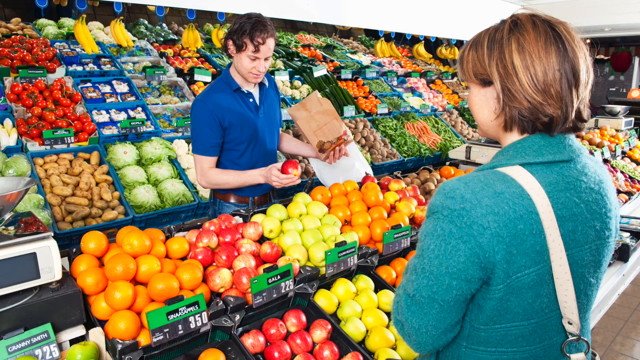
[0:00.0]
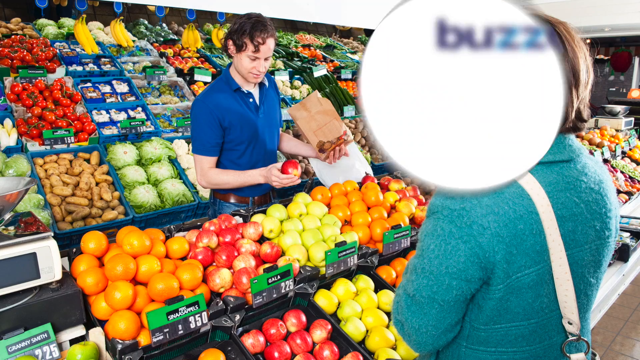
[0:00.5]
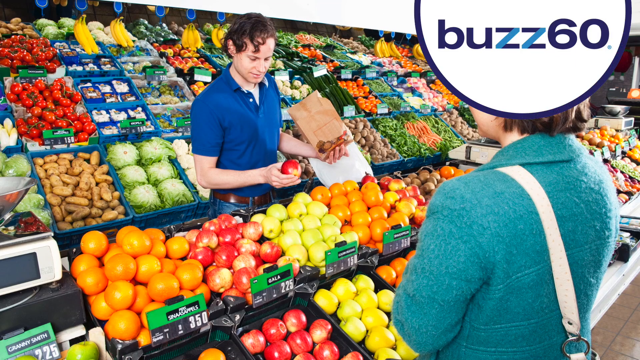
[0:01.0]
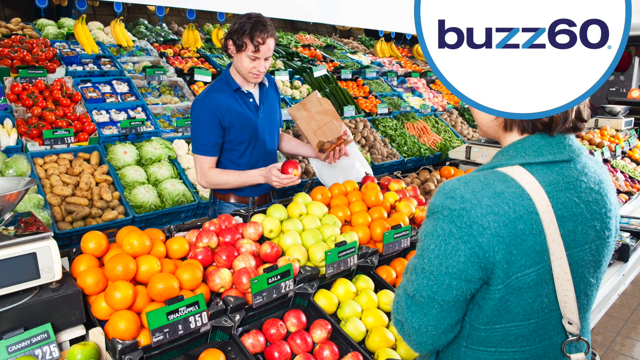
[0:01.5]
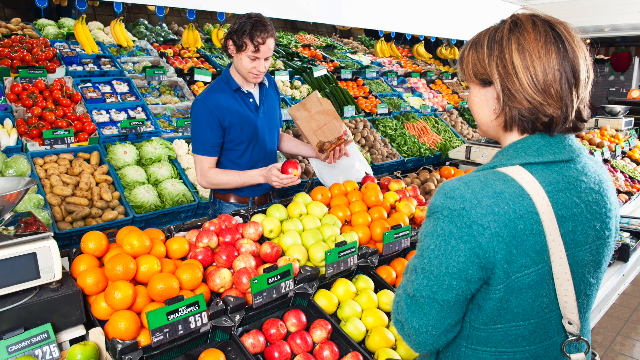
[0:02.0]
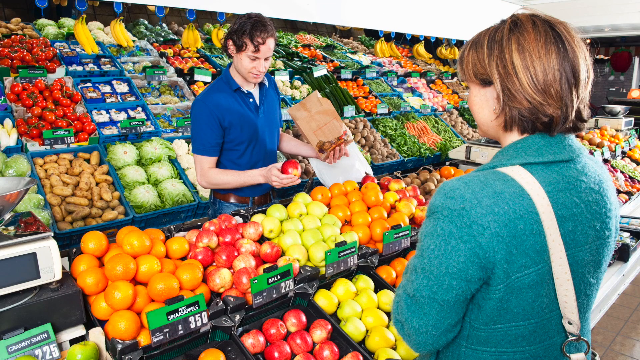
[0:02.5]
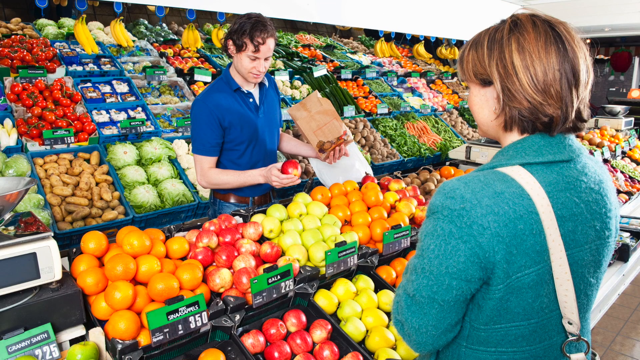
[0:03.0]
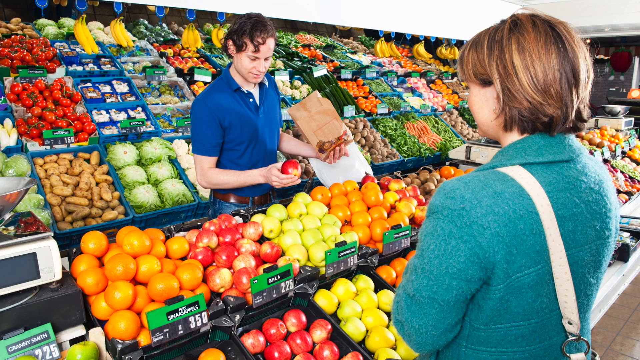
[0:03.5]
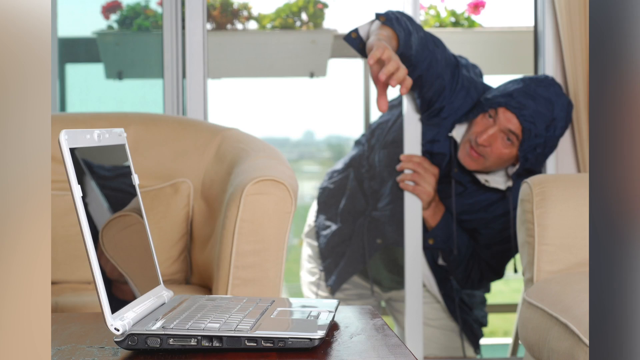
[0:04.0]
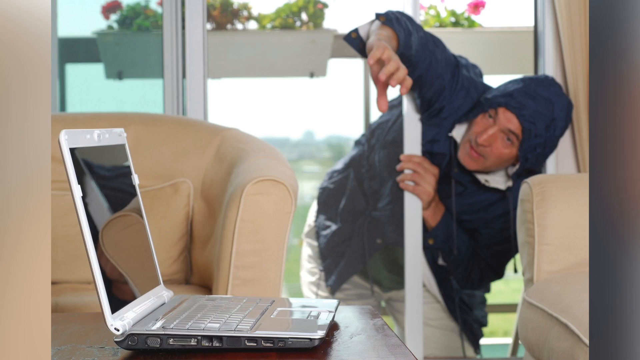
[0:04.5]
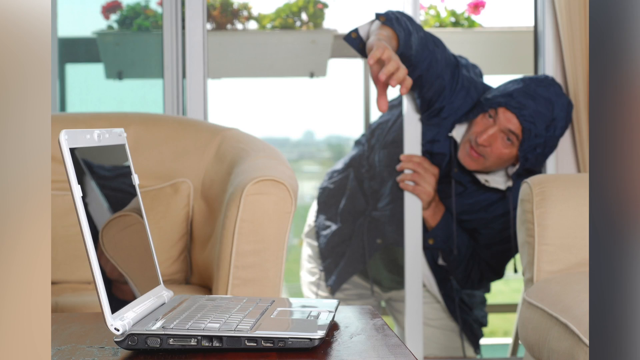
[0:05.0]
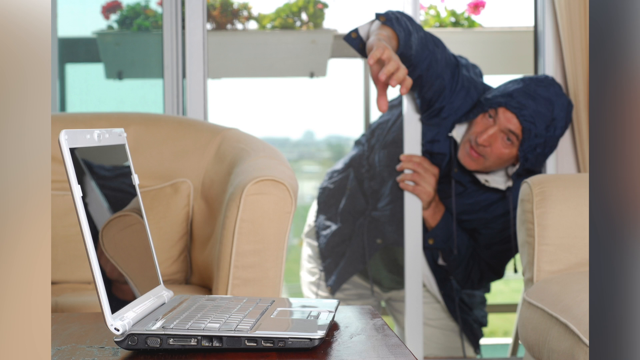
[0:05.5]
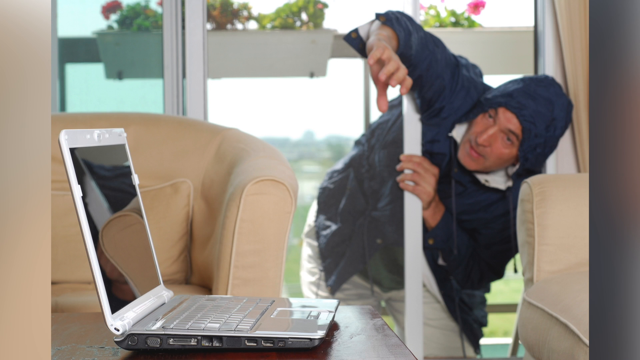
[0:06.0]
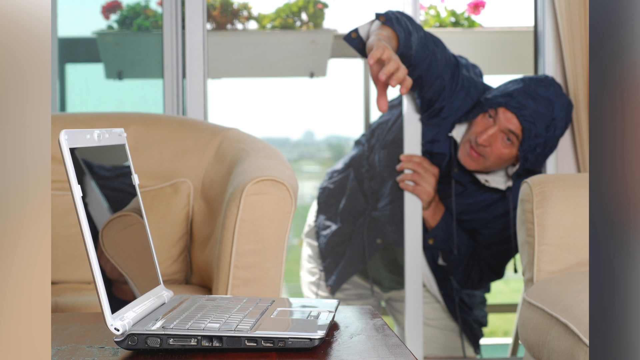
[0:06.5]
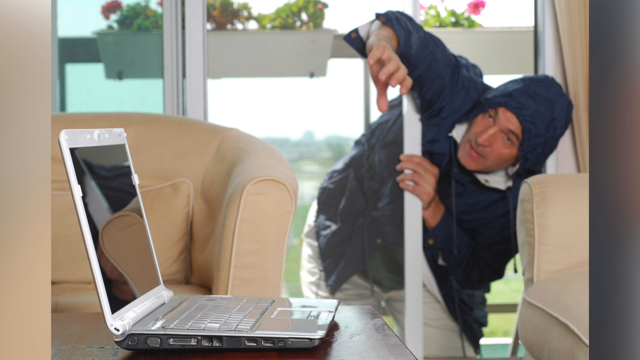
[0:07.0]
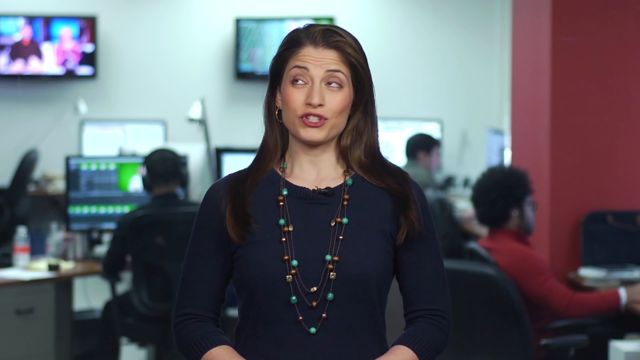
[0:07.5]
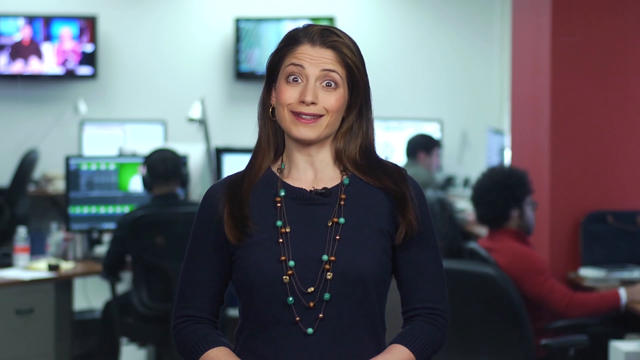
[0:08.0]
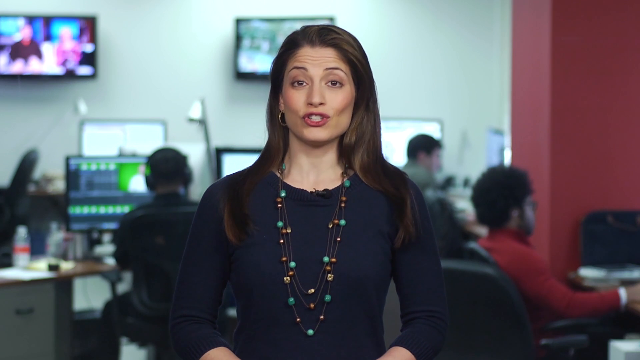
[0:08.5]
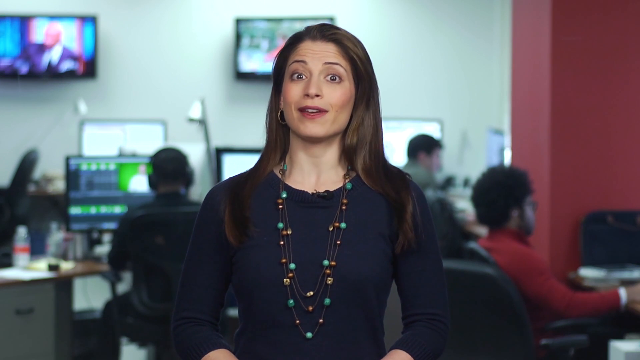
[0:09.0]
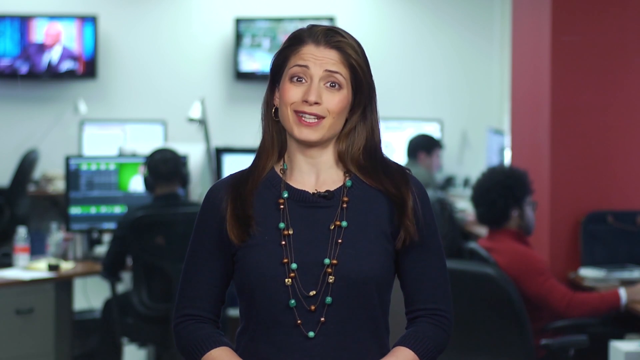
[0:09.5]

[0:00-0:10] A picture of a marketplace shows a woman with a handbag and a green sweater, and an attendant dressed in a blue shirt, blue jeans and a brown belt holding a red fruit, with some pieces of a brown bag there. The market has many items: vegetables and fruits, including apples, oranges, cucumbers, bananas, potatoes and onions. The video shows the details of the items, and the market seems large, with different items carrying price tags. There are crates of cabbages and crates of onions, and some bananas are hanging. Another picture then shows a man trying to repair something, with a white laptop beside him and a cream coat. Behind him is a big white wall with a window of transparent glass.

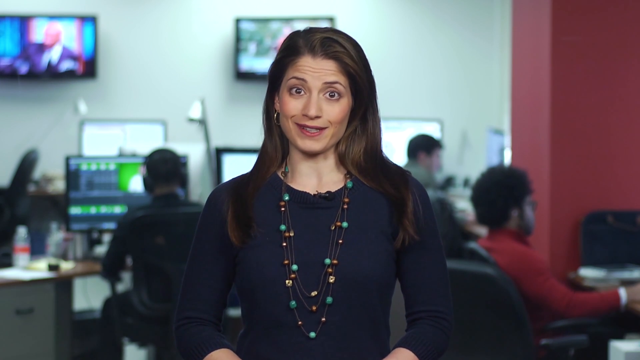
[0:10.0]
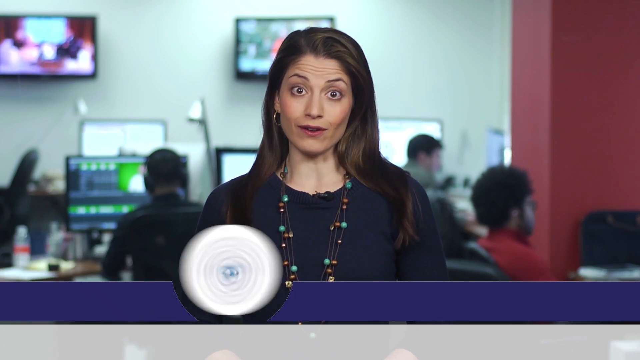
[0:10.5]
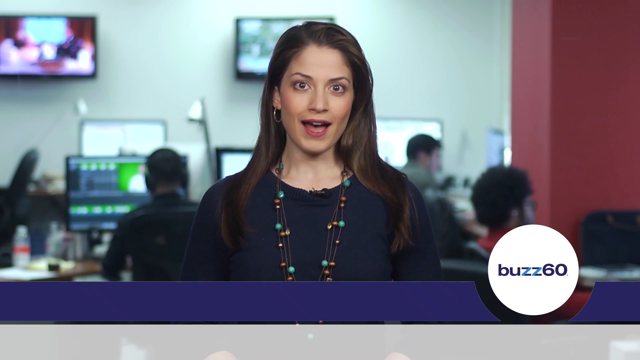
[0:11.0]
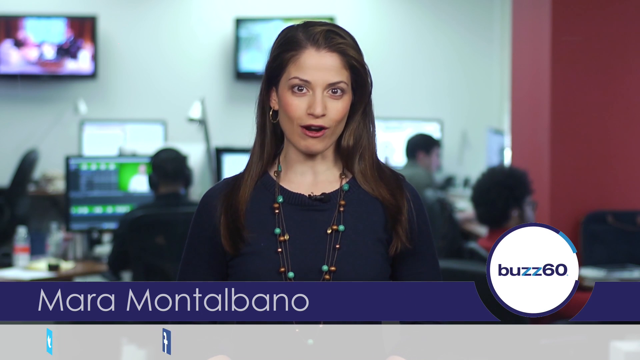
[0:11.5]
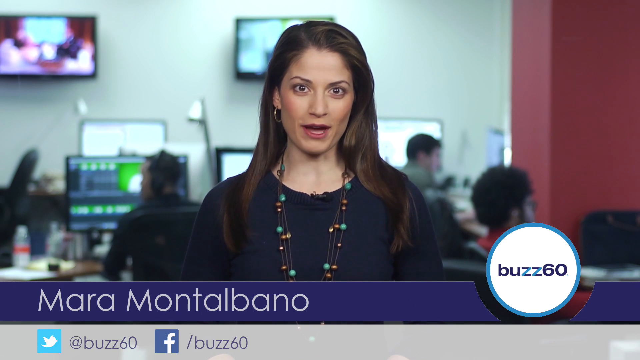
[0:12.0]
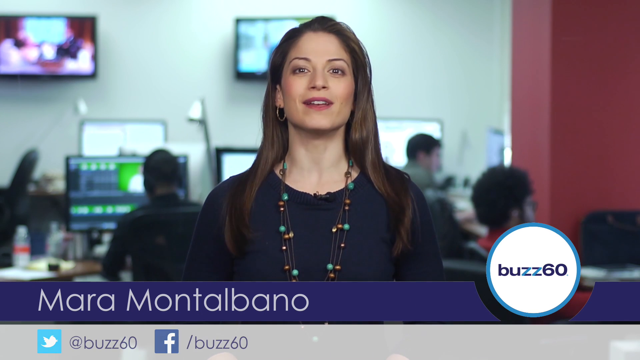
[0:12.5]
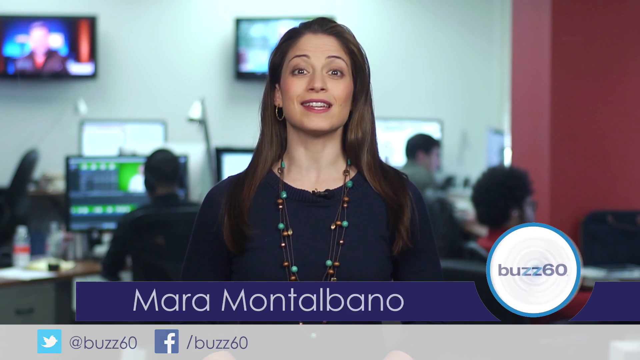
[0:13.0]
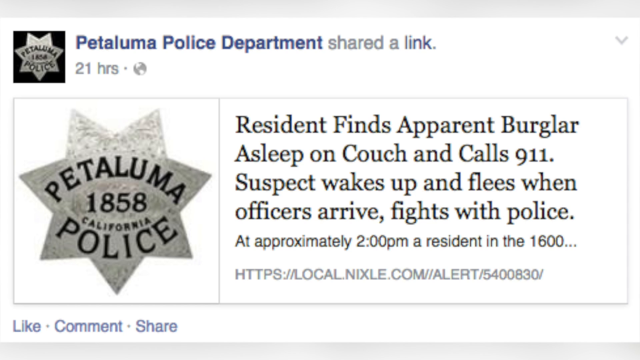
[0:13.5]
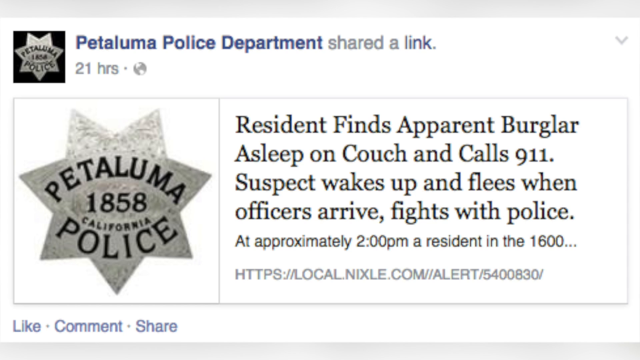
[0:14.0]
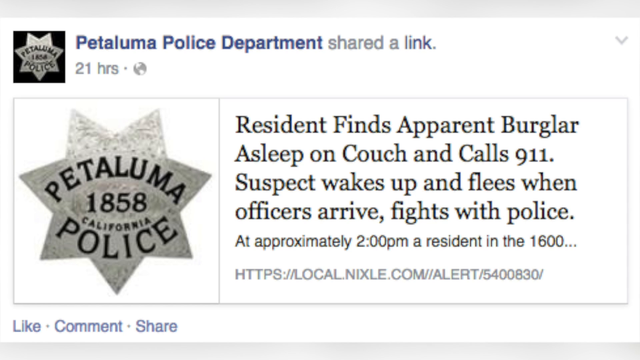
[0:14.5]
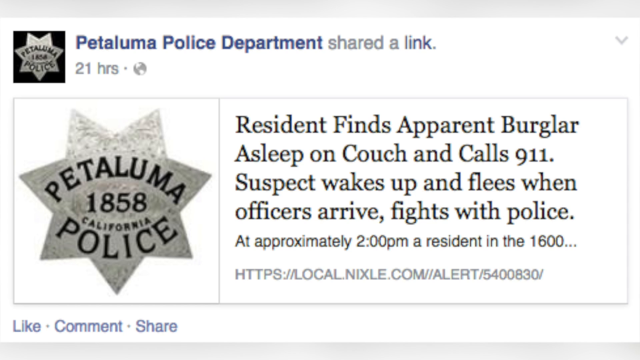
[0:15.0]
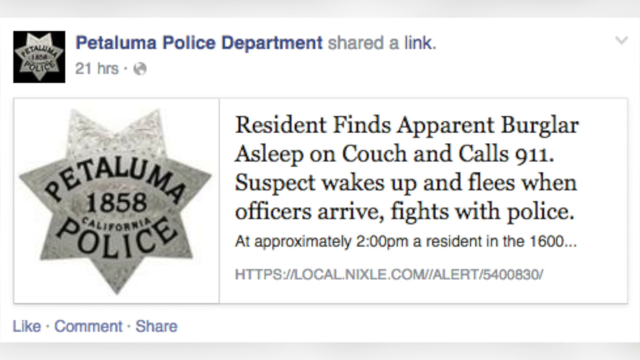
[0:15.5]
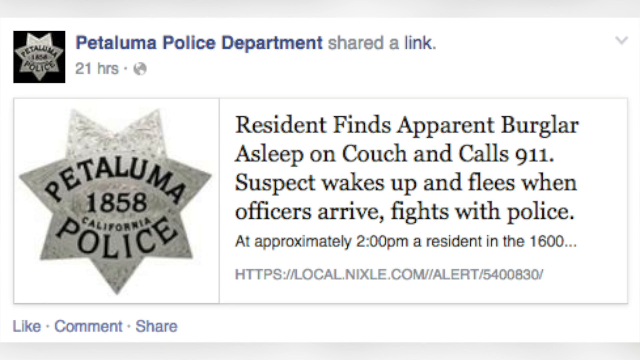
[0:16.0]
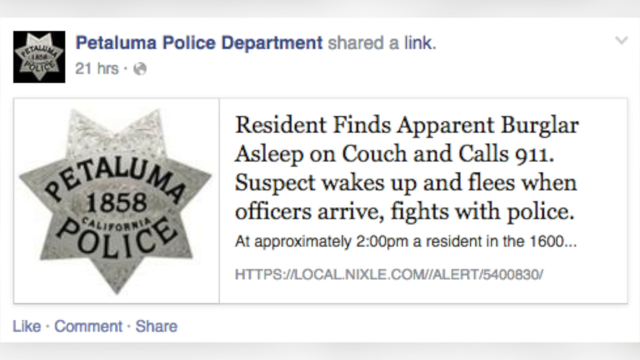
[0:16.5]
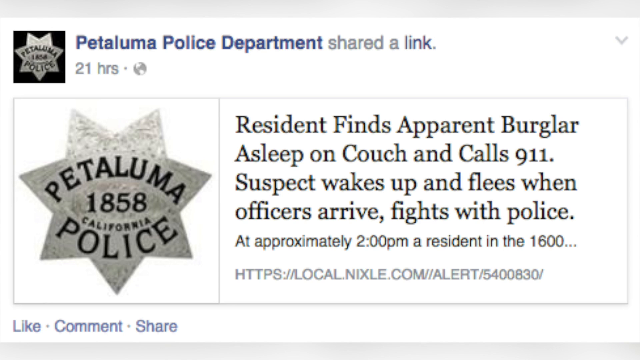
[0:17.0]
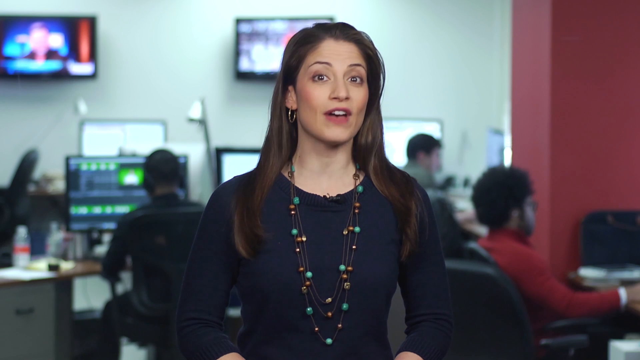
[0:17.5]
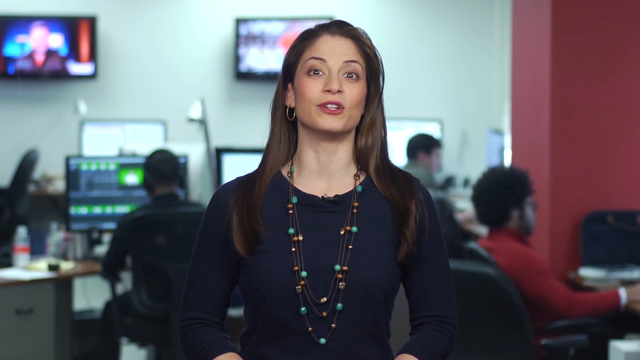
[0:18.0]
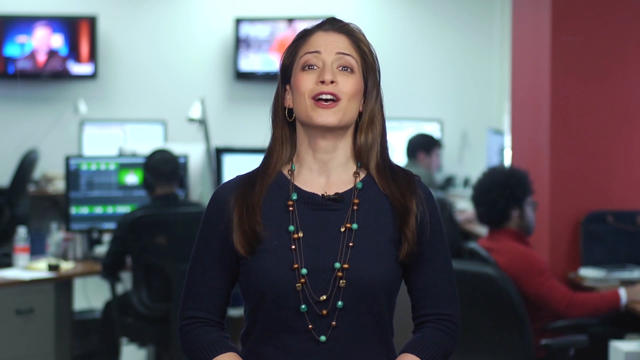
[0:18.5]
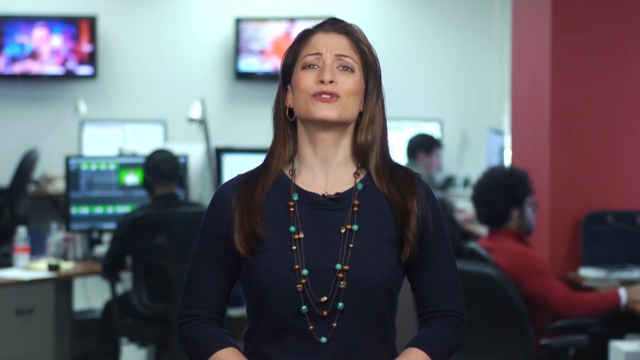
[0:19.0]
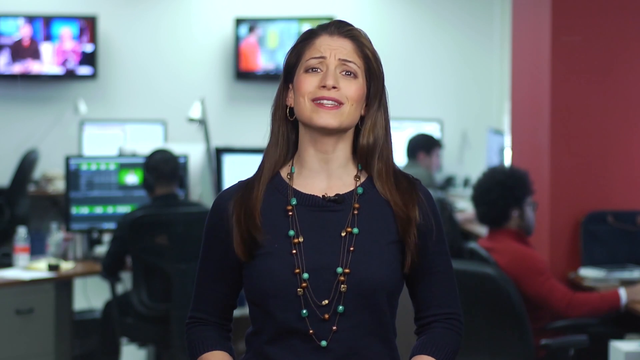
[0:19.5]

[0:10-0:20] A woman, maybe in her late 20s, faces the camera and seems to be reporting something. She wears a black sweater and a decorated necklace, and her long hair rests on her shoulders. She is smiling and seems busy looking into the camera and talking. Behind her, a group of people are seated at computer screens or monitors and seem busy on them. There are also two screens on the wall, apparently televisions, and a caption appears on screen. Another page is then displayed with a headline reading "Petaluma Police Department" and text including "suspect wakes up and flees when officers arrive, fights with the police". The video then returns to the woman as she winds up the story, expressive as she tells it.